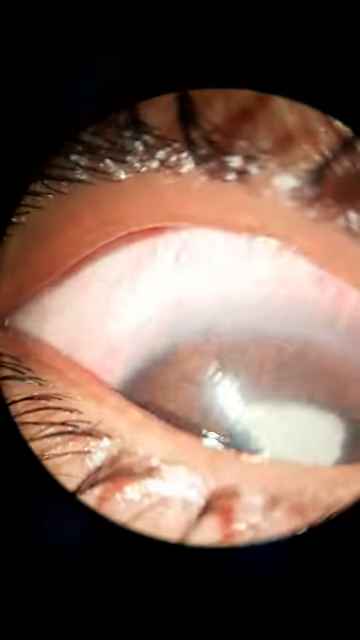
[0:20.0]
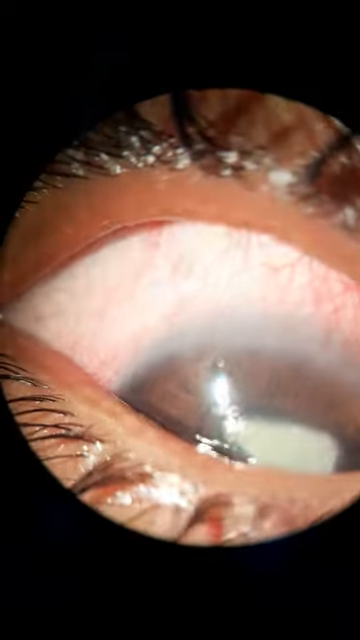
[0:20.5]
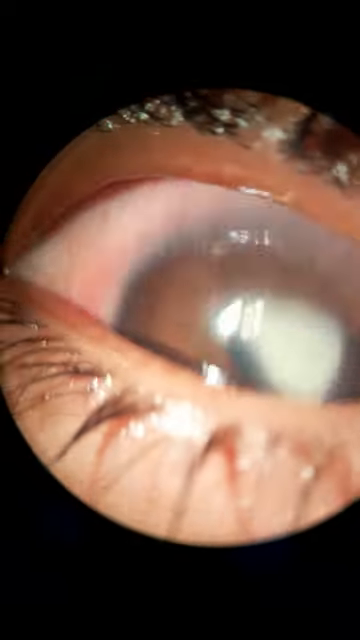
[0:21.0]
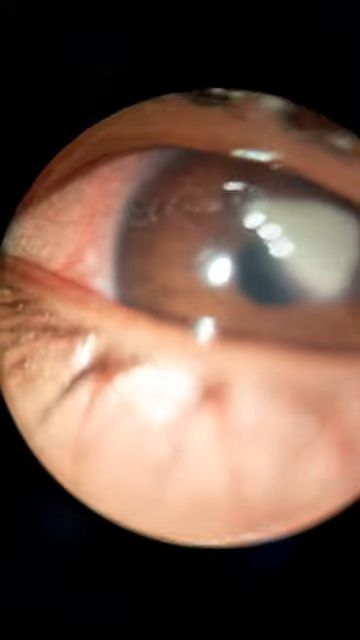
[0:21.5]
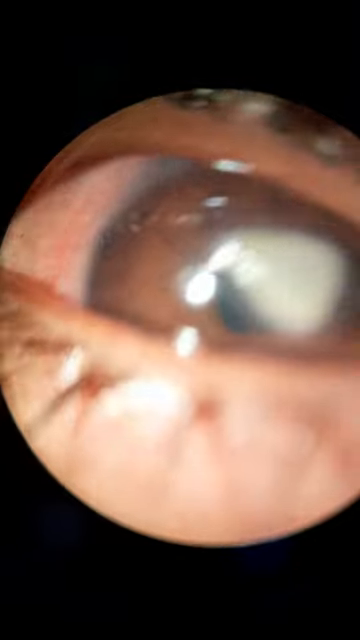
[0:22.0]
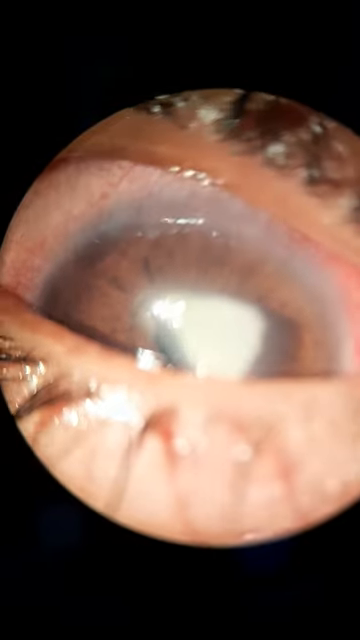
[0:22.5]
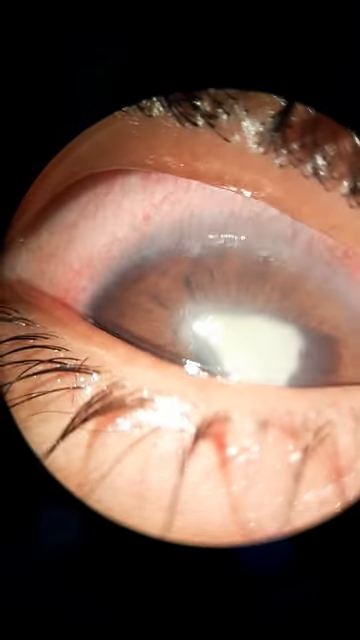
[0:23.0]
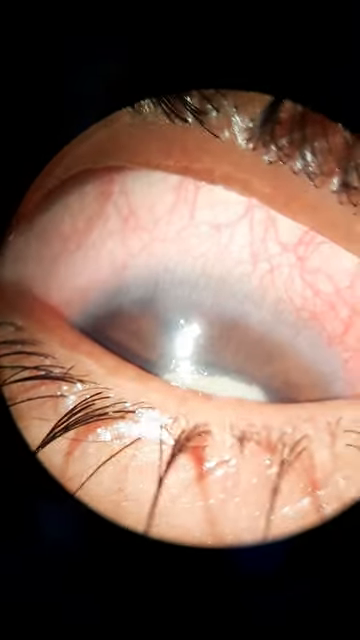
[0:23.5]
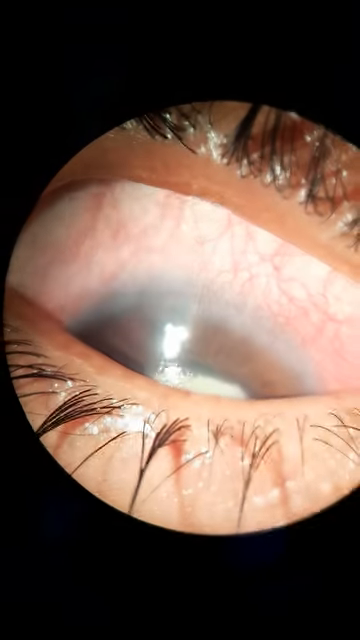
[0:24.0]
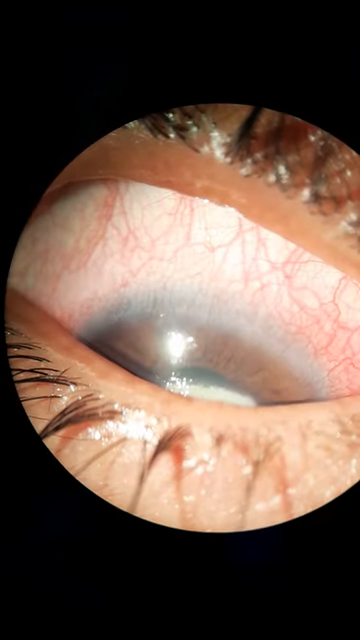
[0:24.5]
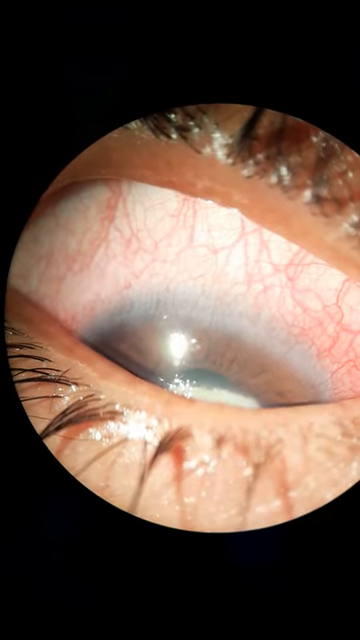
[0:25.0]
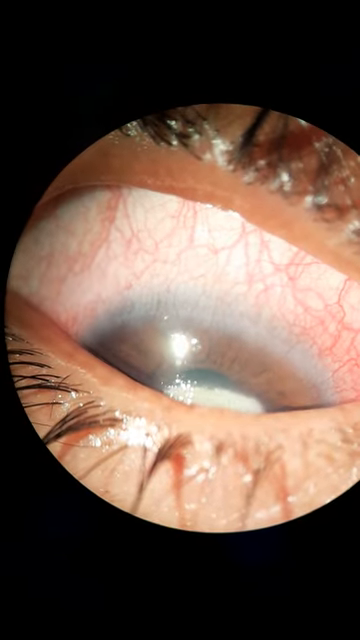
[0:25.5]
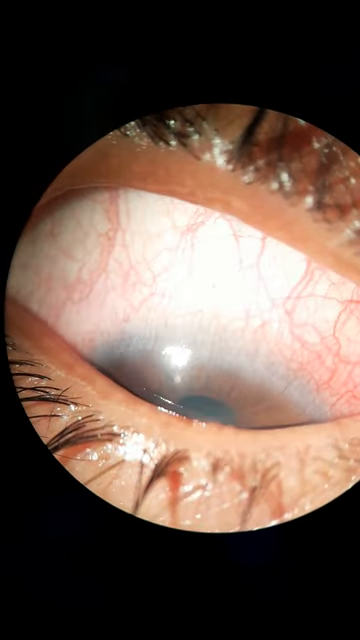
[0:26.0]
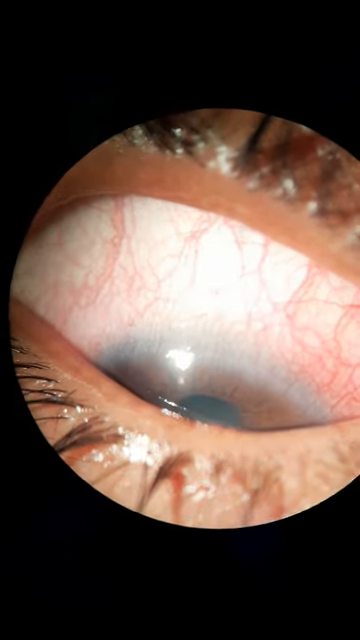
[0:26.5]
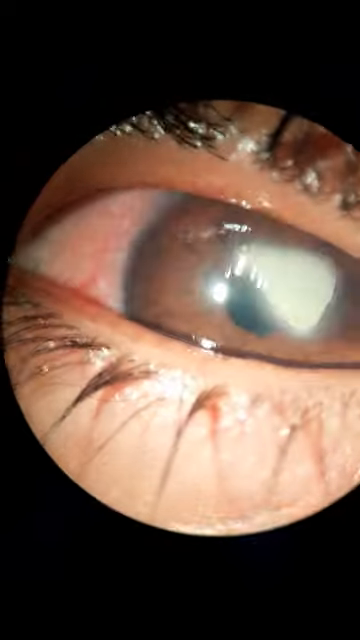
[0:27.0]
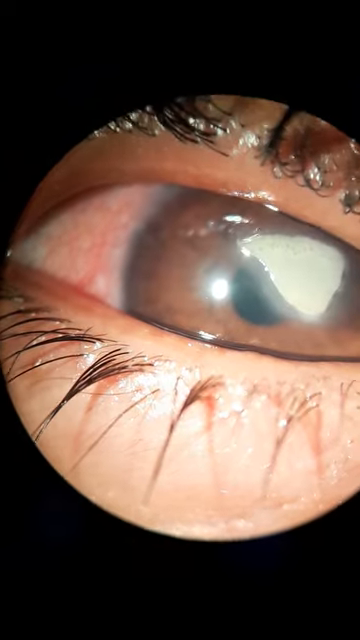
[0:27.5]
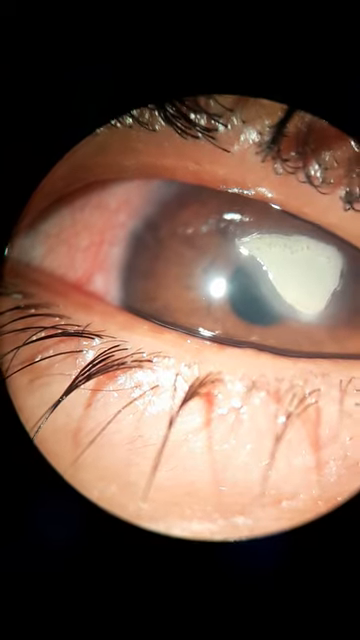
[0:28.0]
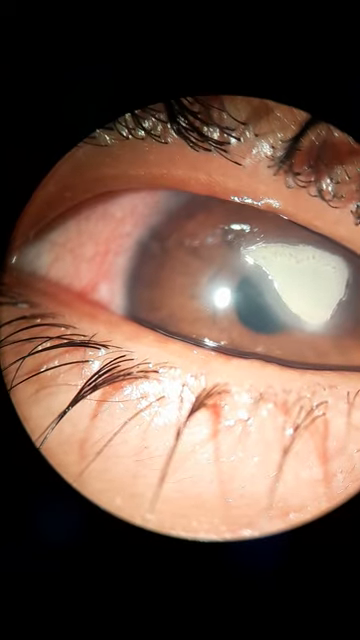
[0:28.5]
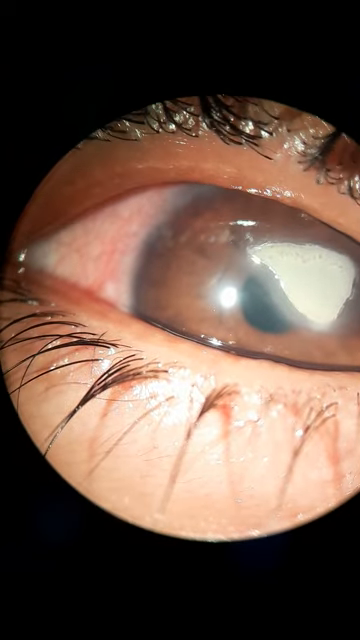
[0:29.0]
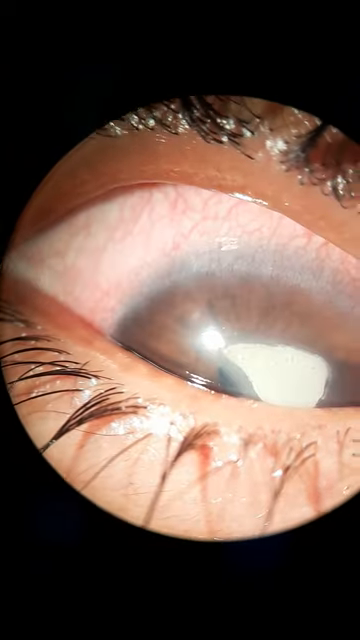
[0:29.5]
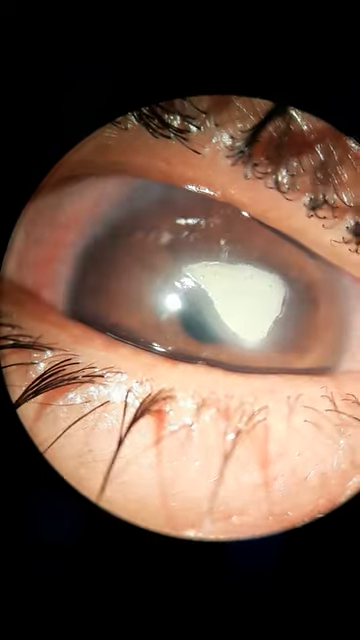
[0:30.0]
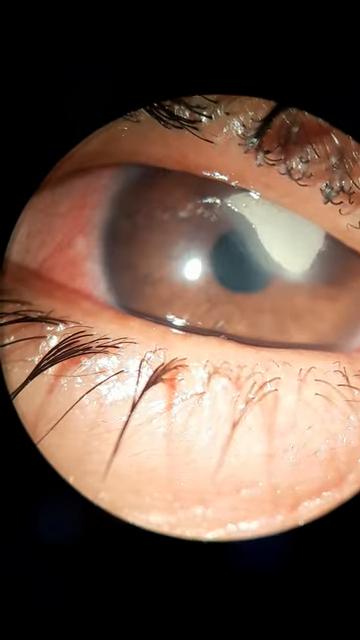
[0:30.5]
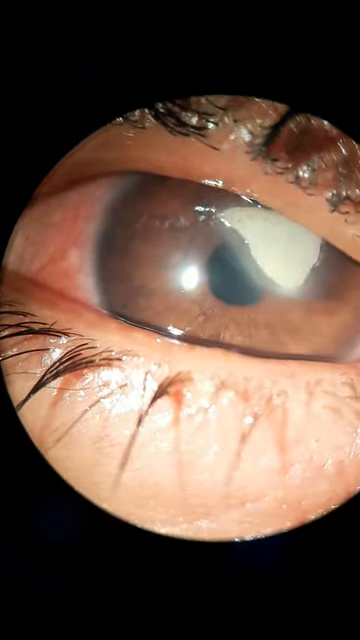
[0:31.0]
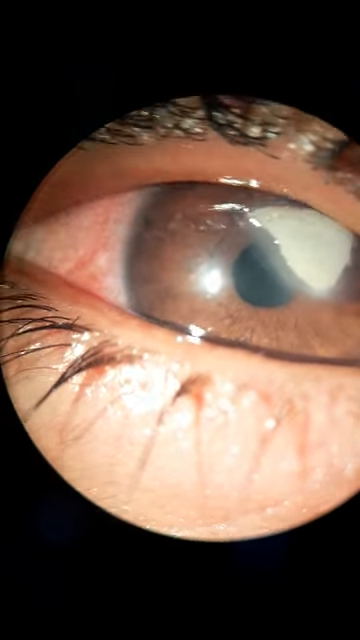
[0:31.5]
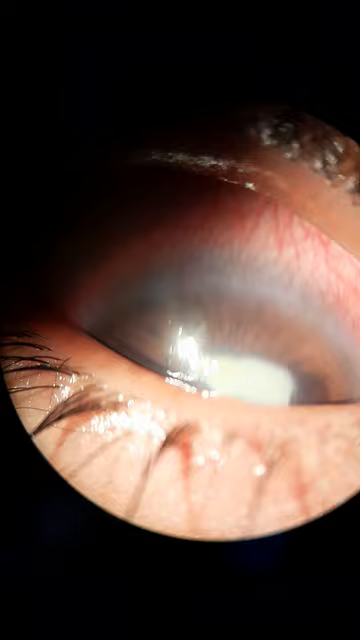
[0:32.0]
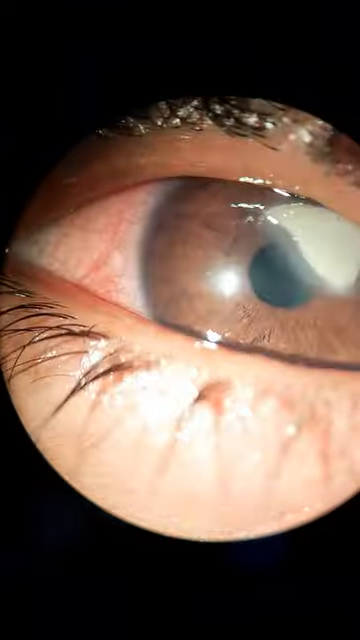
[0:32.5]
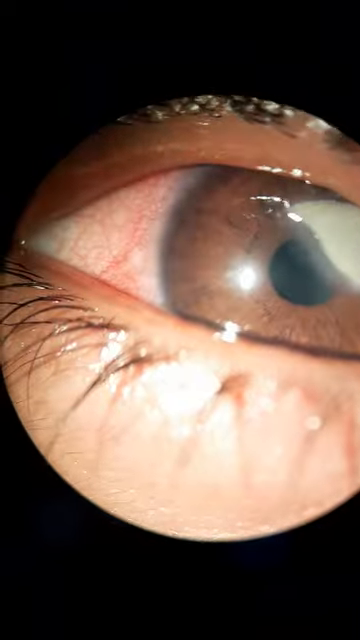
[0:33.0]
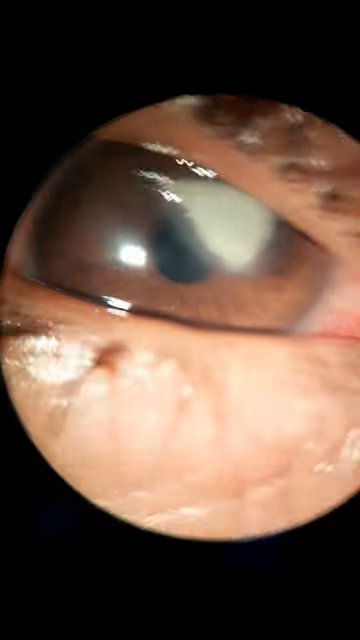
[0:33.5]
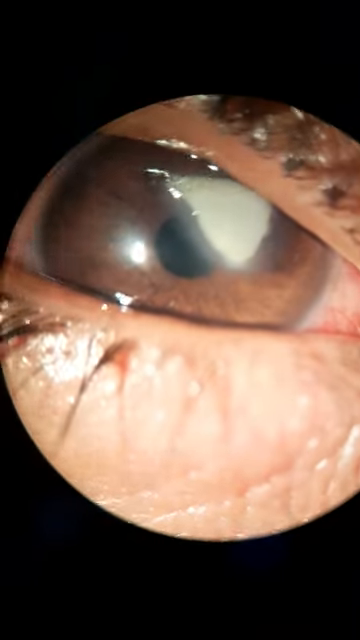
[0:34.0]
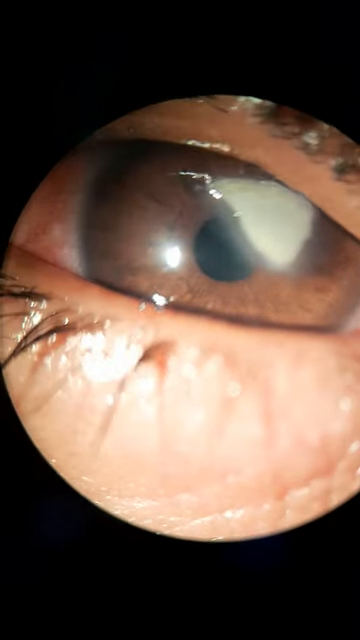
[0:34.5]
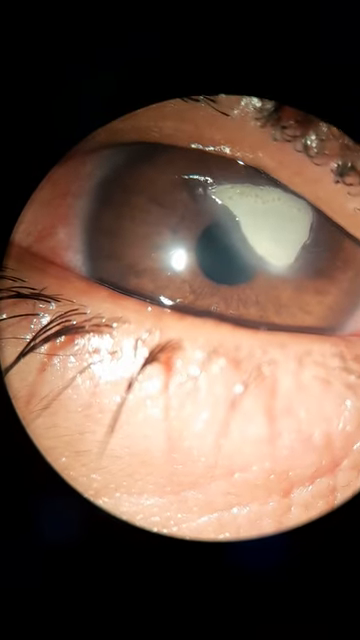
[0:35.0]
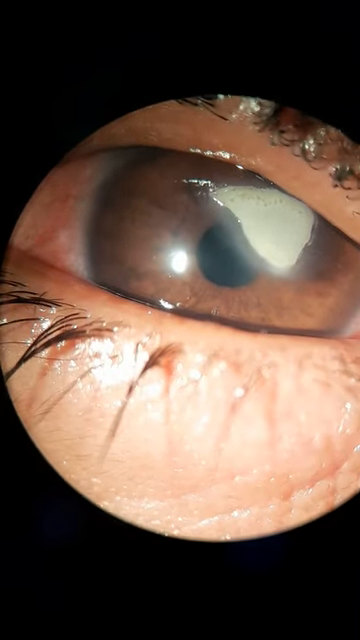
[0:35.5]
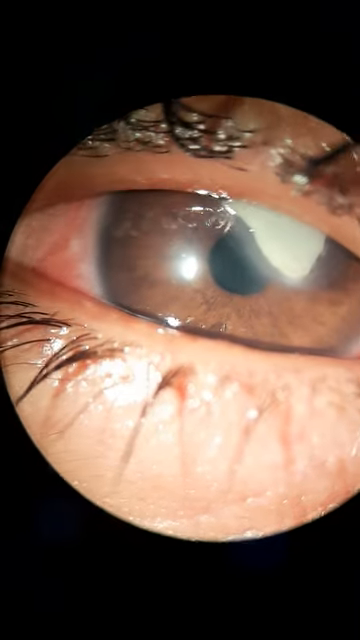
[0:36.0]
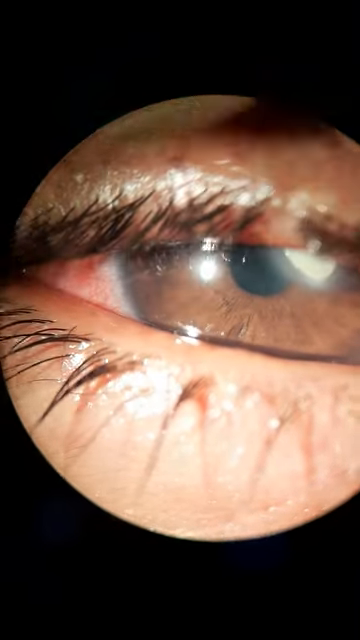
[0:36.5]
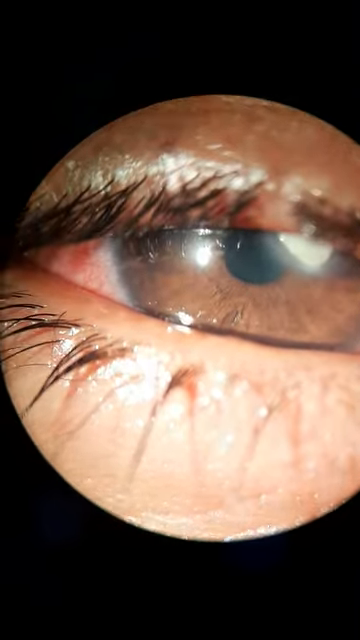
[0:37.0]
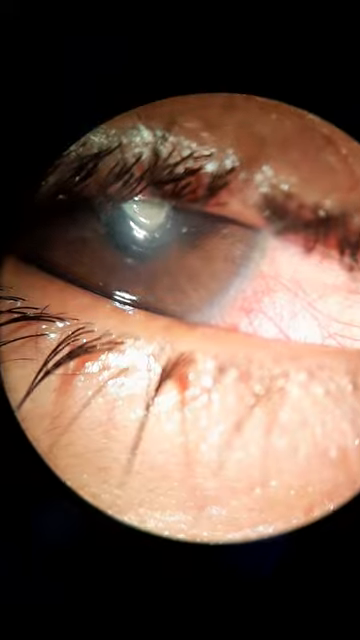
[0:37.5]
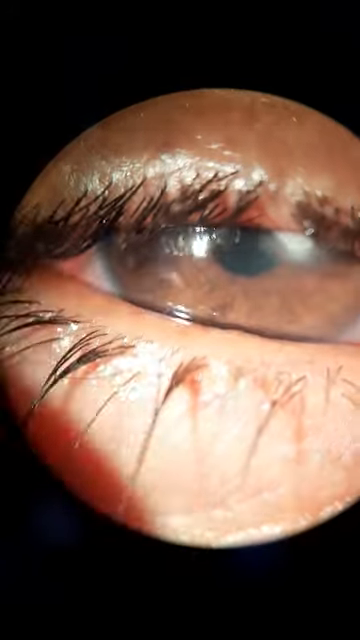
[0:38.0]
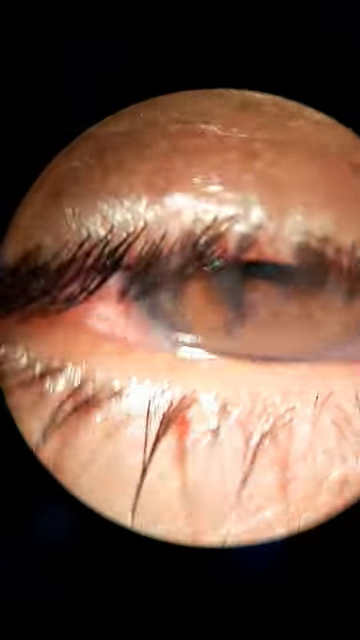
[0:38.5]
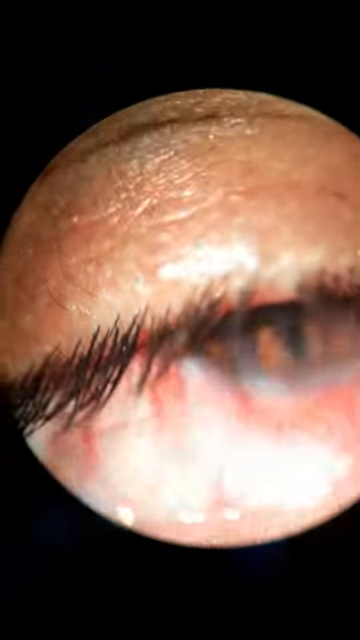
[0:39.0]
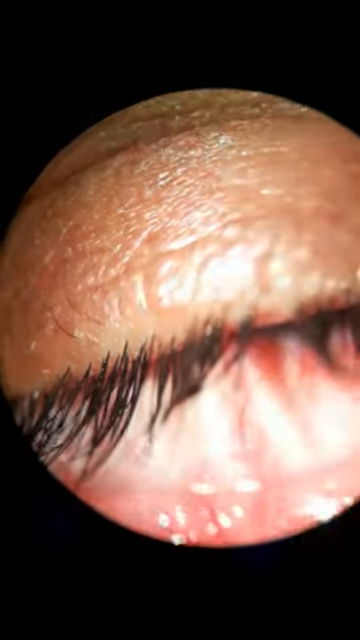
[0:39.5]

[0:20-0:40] The very close-up image continues on what appears to be a human eyeball. The eyeball is not dilated very much and is brown. The person appears to have some redness on the white part of the eye, and the eyelashes are visible. The eyeball is framed so that everything else is blacked out. The person appears to look around and blinks several times. The camera is somewhat shaky as it appears to fixate on the eyeball, moving around just a little bit. Someone appears to be pulling on the underside of the eye, since the eye is visibly being moved, but no finger can be seen doing this.